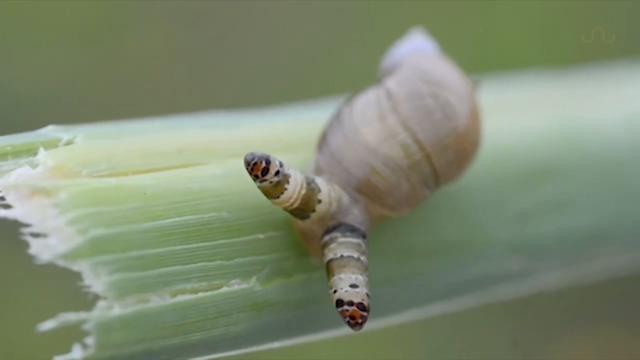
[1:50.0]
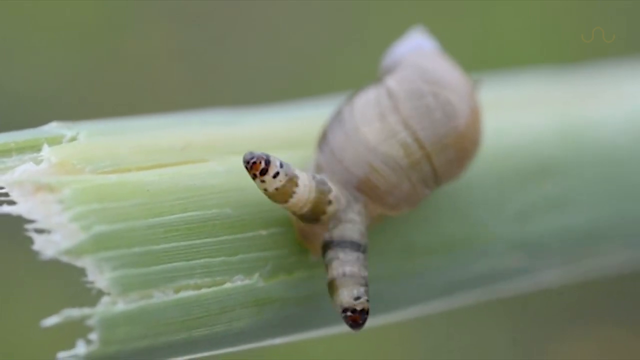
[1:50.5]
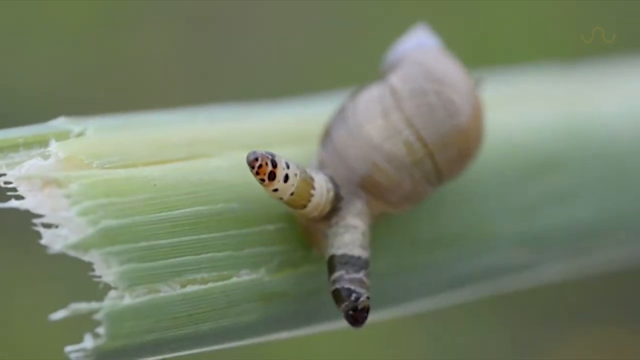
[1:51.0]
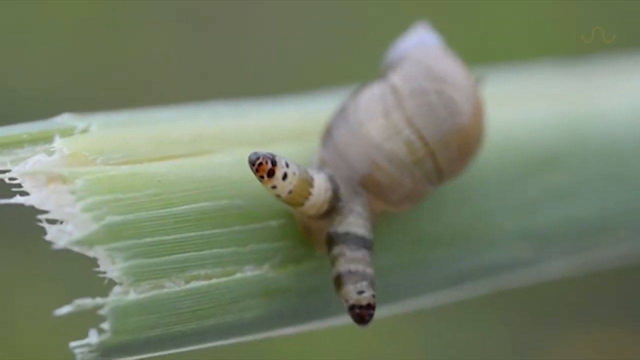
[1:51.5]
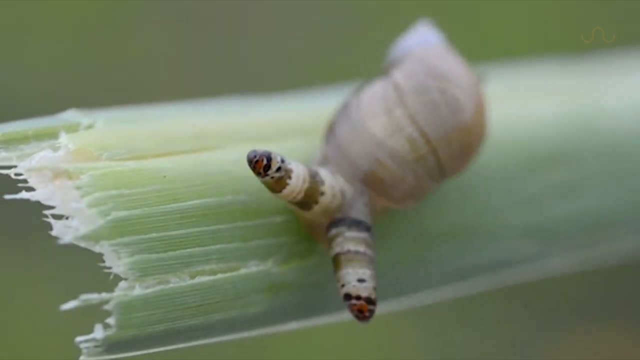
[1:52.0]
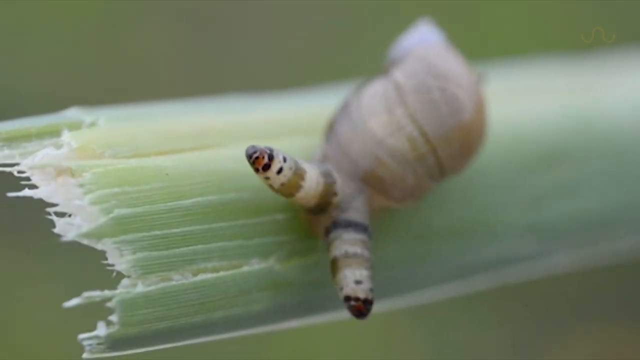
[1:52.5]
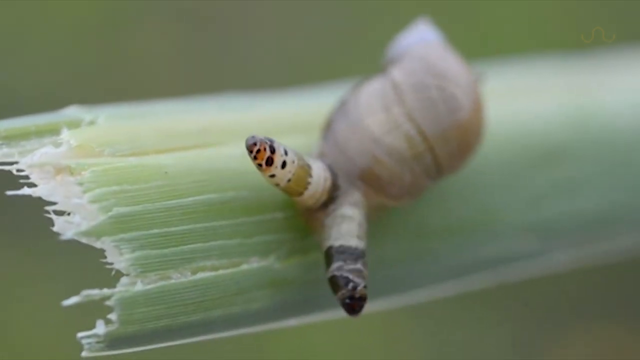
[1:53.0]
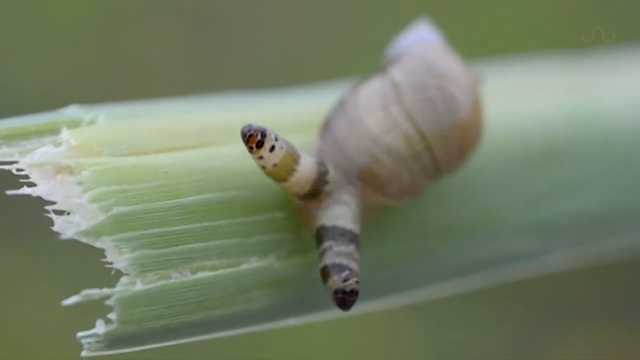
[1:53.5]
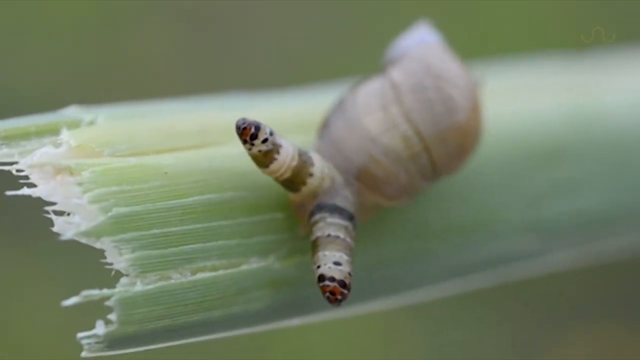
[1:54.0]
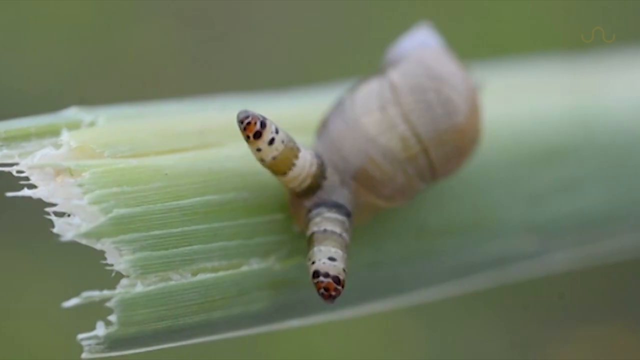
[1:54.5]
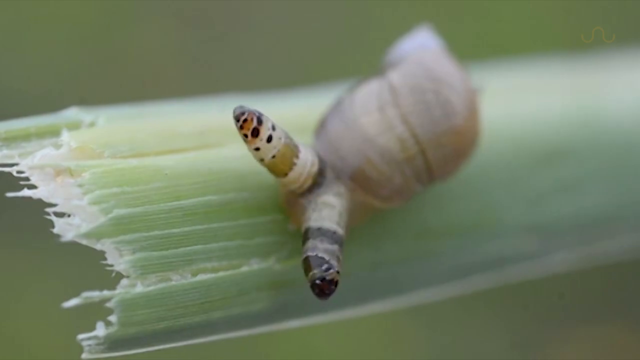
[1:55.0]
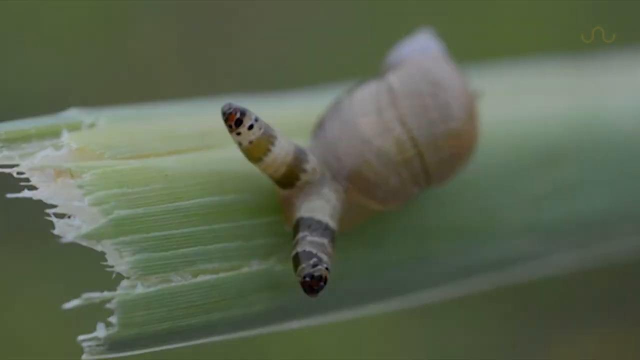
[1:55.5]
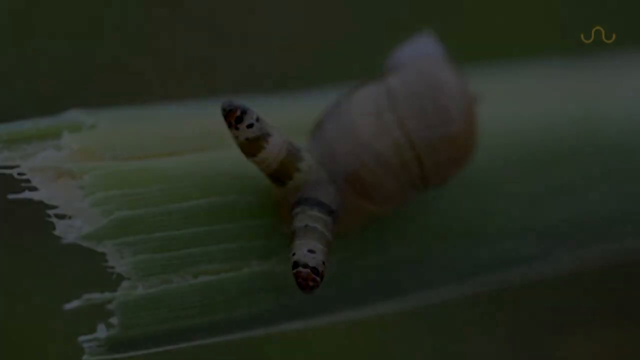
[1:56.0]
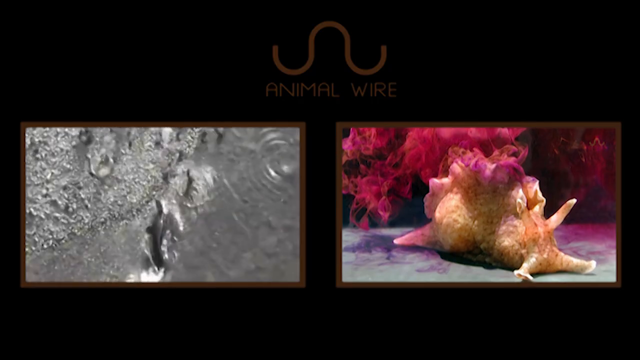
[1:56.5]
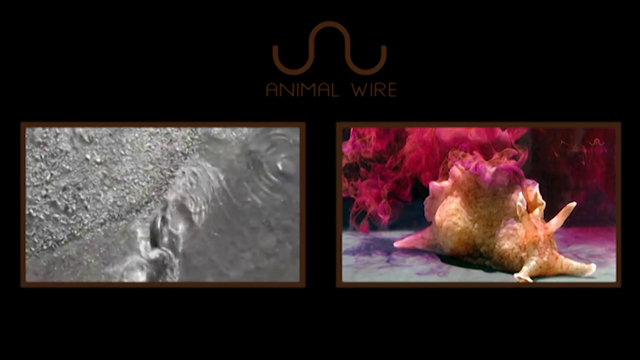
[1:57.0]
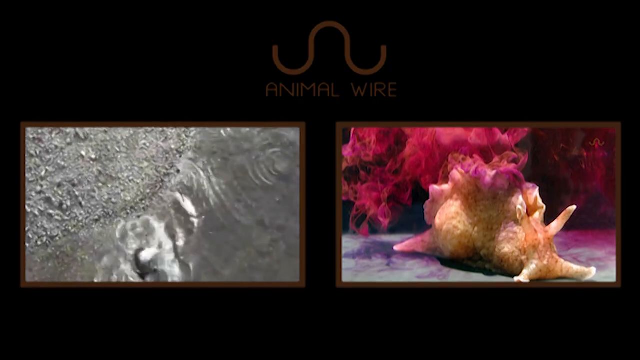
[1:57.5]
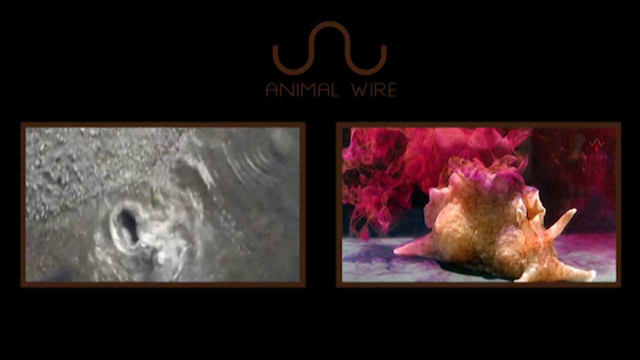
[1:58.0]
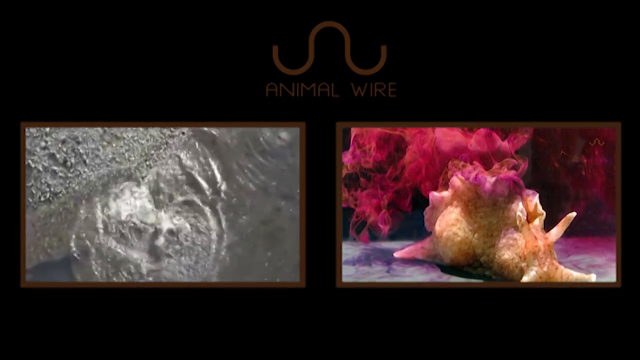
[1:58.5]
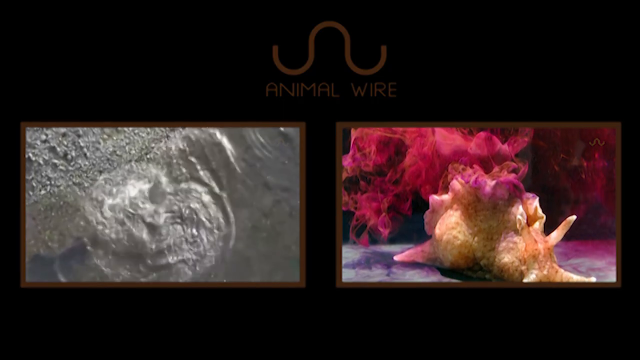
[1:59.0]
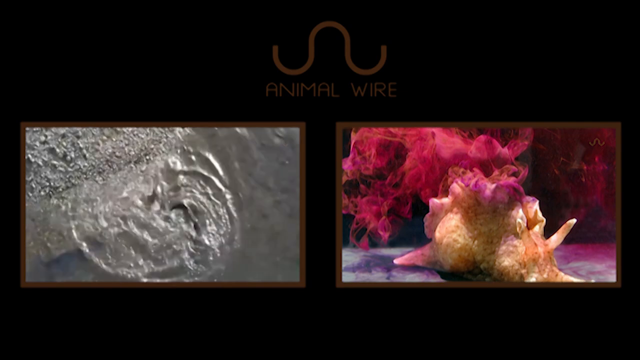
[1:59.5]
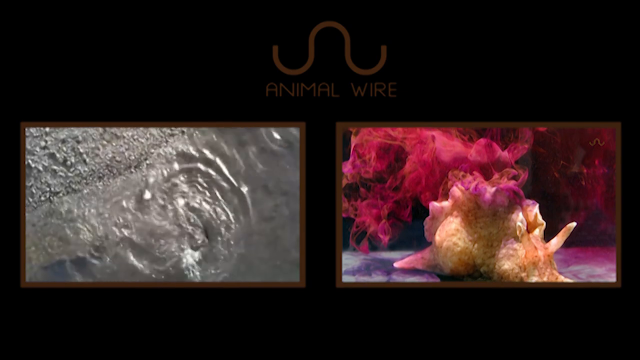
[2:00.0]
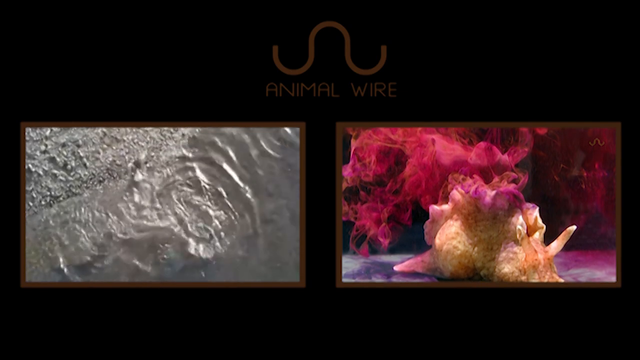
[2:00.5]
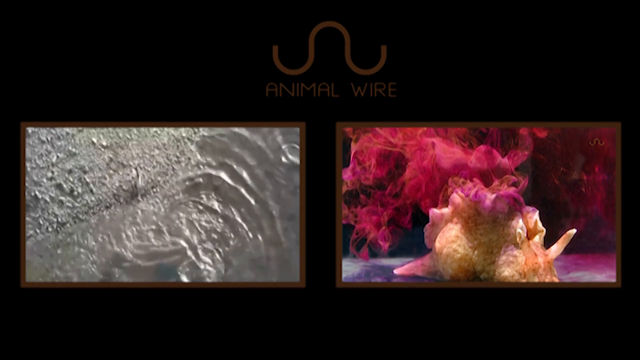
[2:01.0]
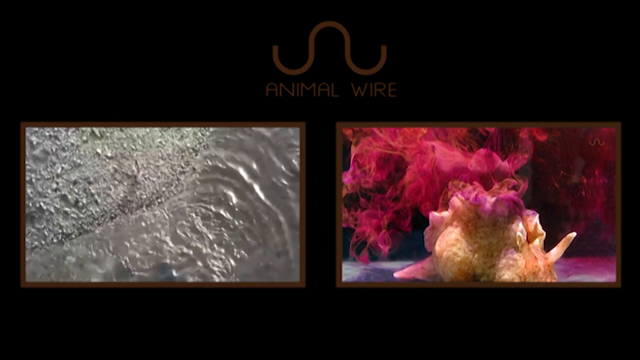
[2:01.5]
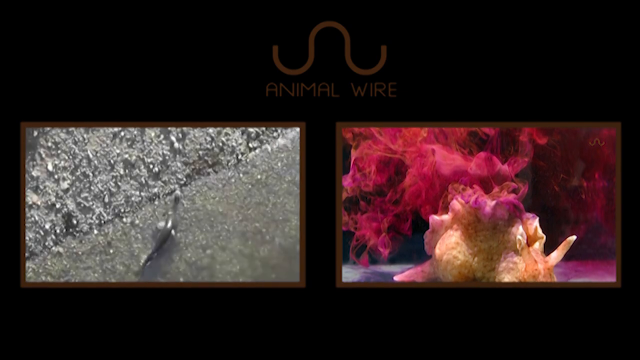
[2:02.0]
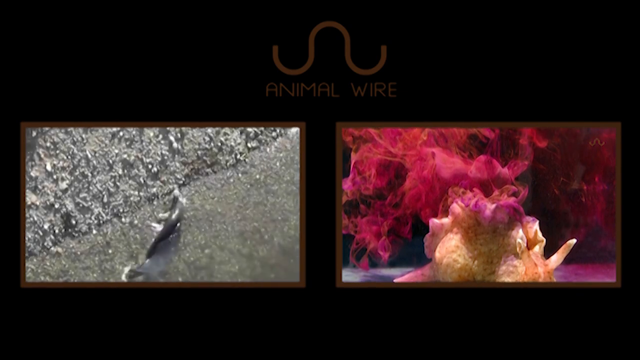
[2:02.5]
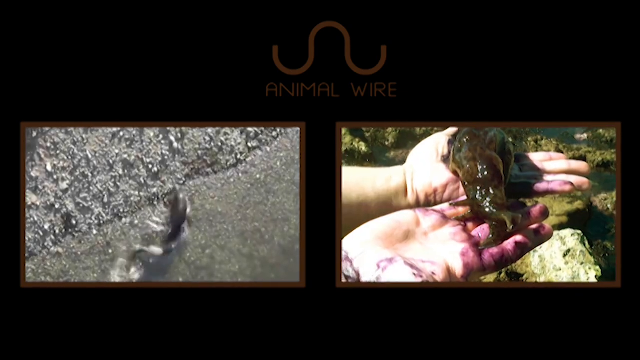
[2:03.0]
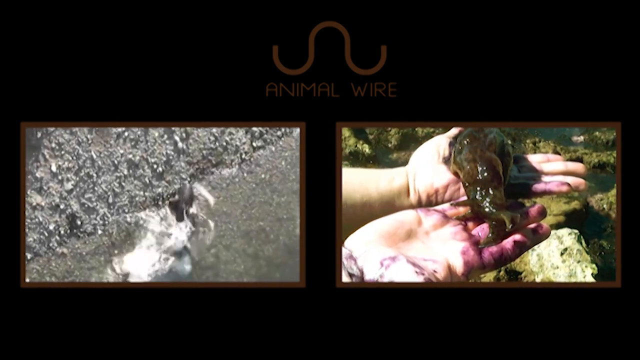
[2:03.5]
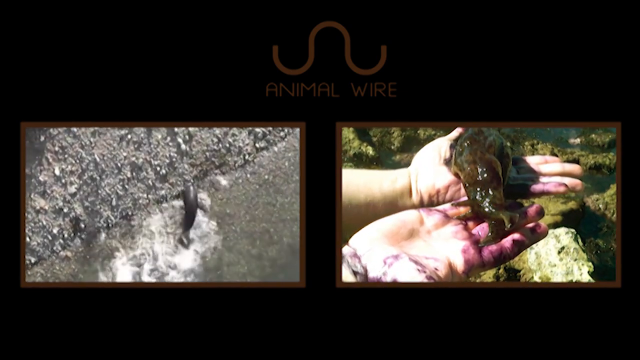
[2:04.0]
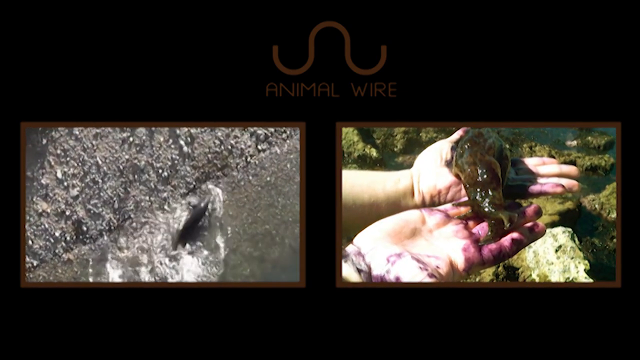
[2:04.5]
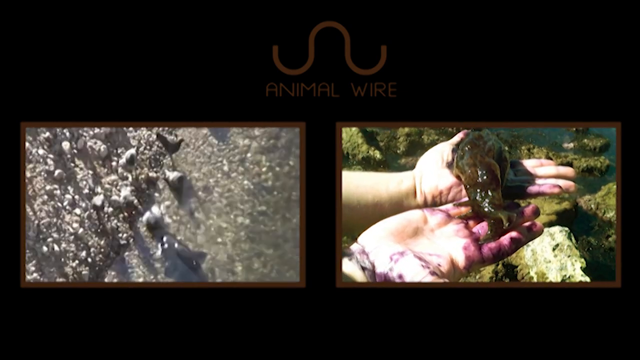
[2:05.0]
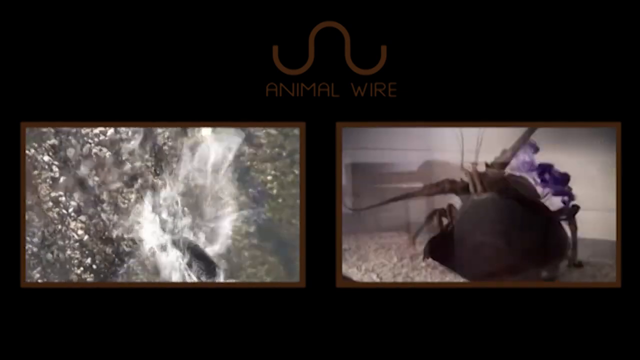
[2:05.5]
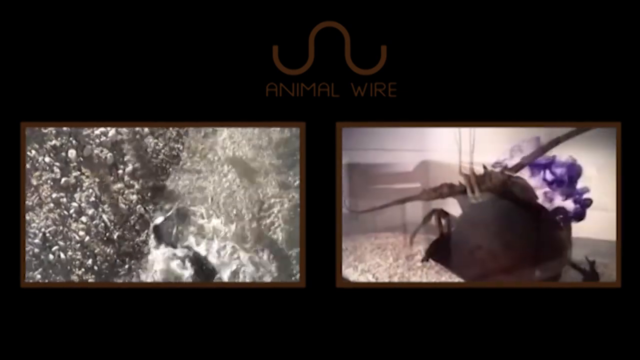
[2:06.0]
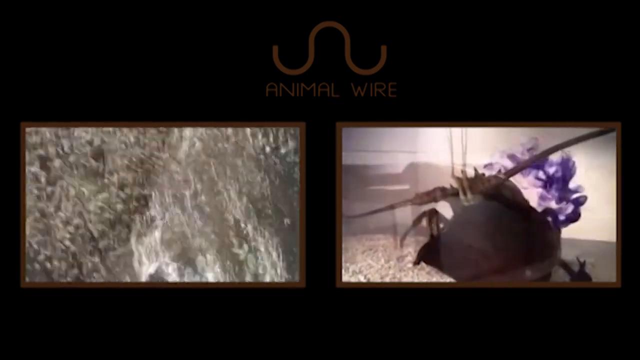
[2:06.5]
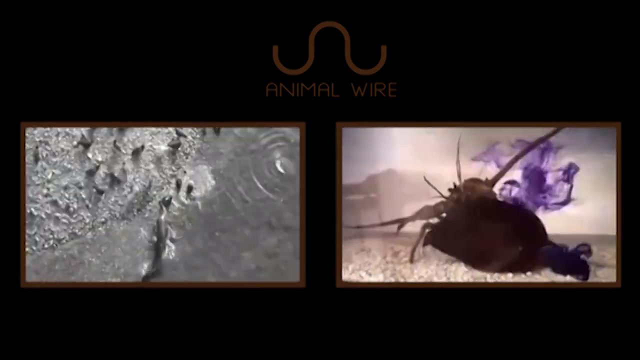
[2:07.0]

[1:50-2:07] A snail-like creature on a green plant stalk turns toward the lower portion and then heads slightly to the left. The video then switches to a screen showing two other videos. In the upper portion of the screen is what looks like a curve that curves up, goes completely back around and then down, and underneath it the words "ANIMAL WIRE" appear in brown capital letters. The video on the left looks more gray and seems to show something watery; it shows what is almost like some birds flapping in the water, or a fish trying to get a bird. The video on the right shows a sort of orange and white creature with some bright pink and fuchsia on it; someone has some green goop in their hands, and then the creature sprays out purple ink, possibly underwater.